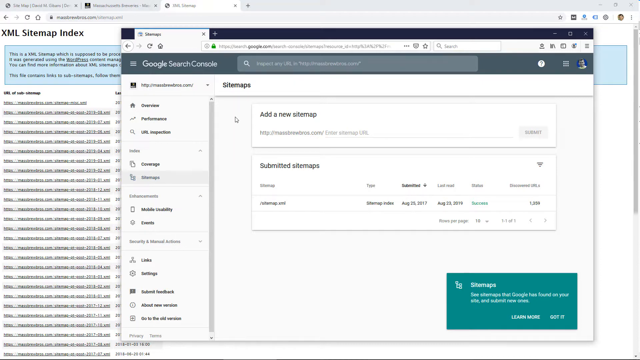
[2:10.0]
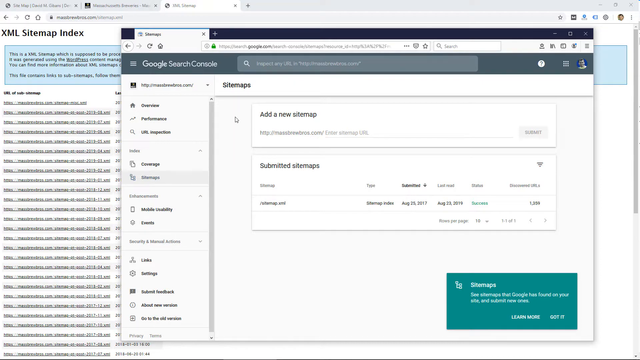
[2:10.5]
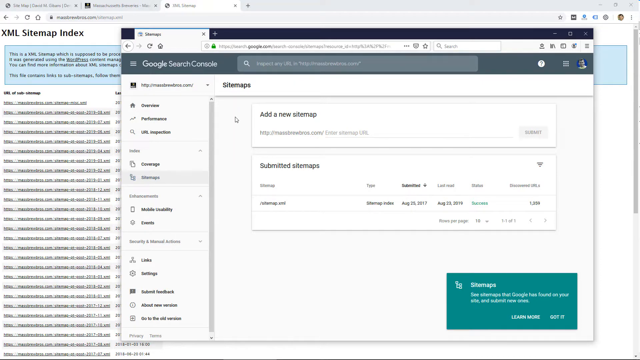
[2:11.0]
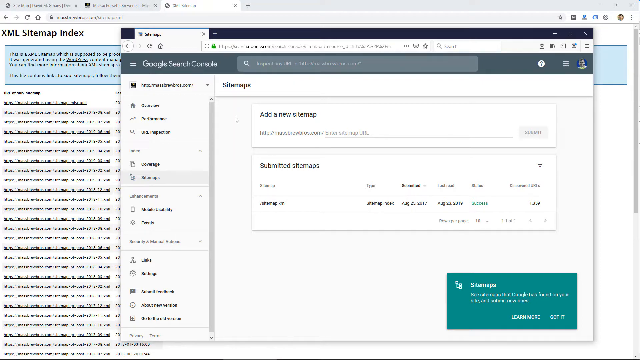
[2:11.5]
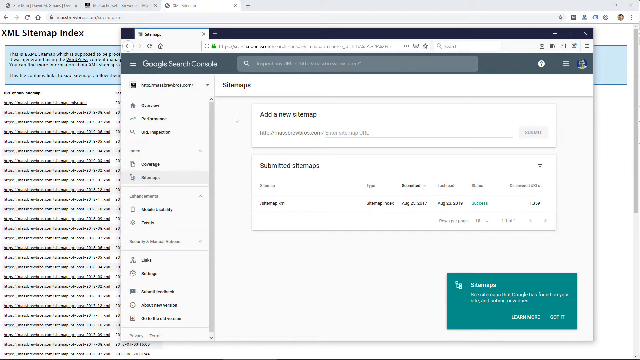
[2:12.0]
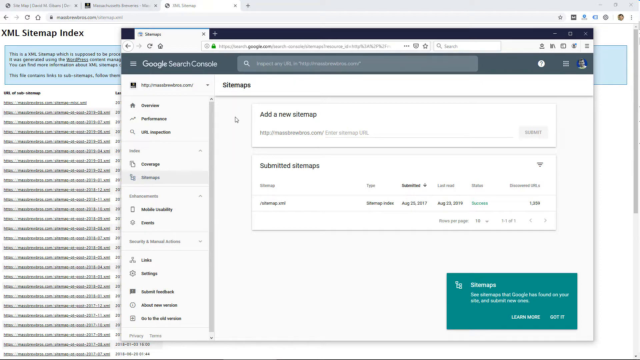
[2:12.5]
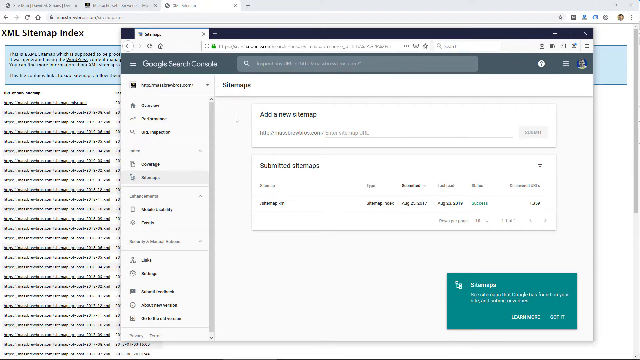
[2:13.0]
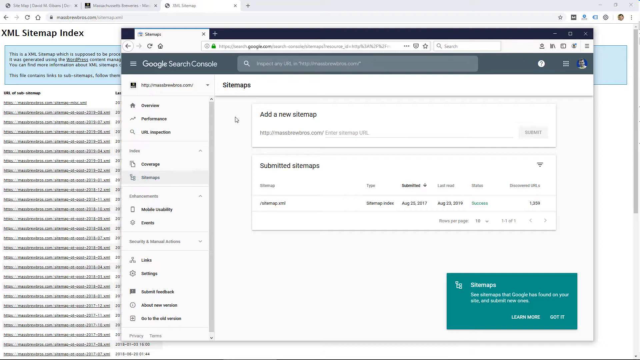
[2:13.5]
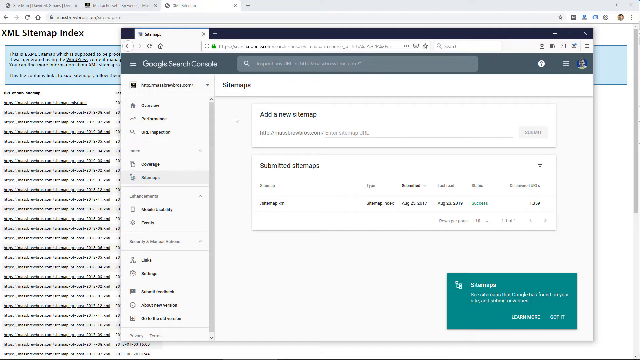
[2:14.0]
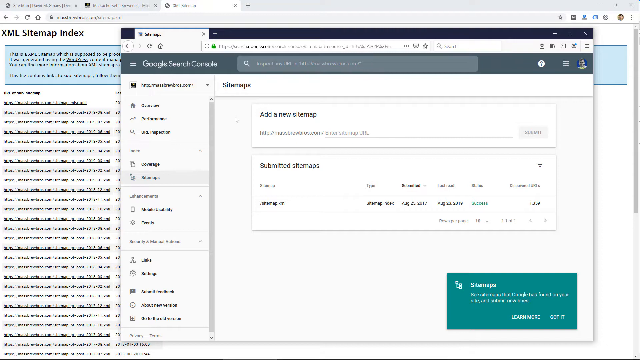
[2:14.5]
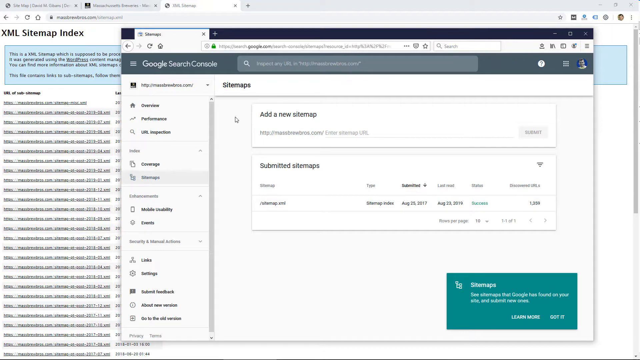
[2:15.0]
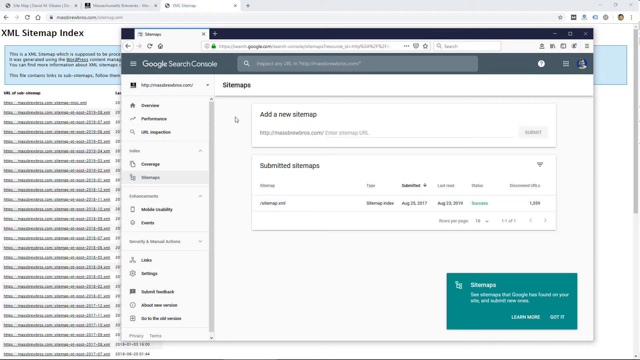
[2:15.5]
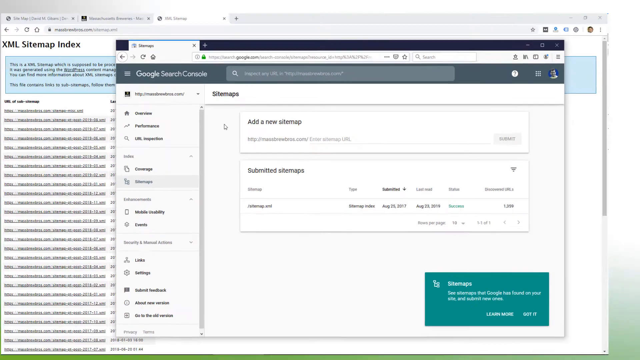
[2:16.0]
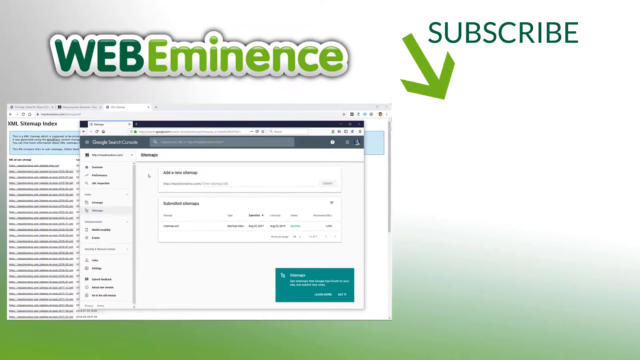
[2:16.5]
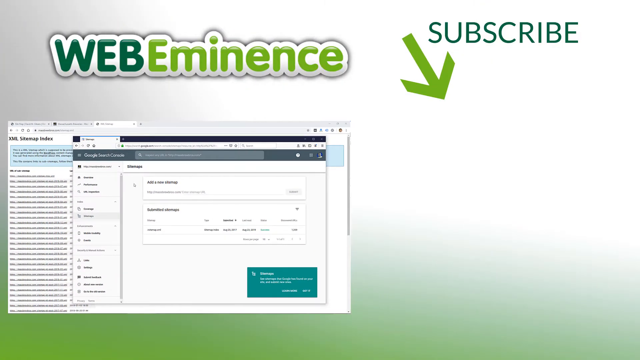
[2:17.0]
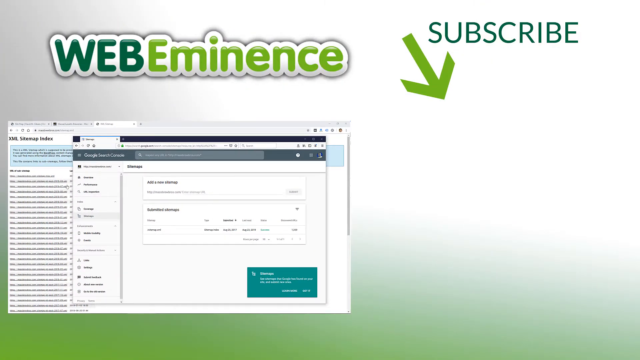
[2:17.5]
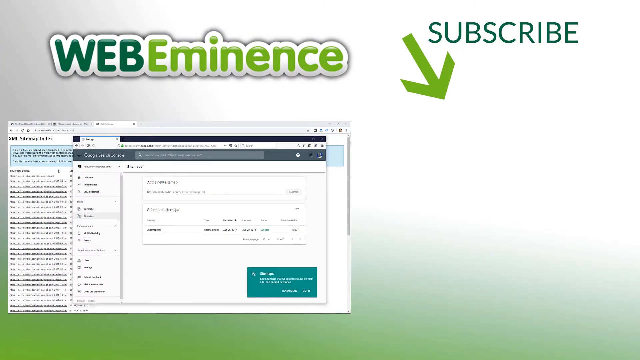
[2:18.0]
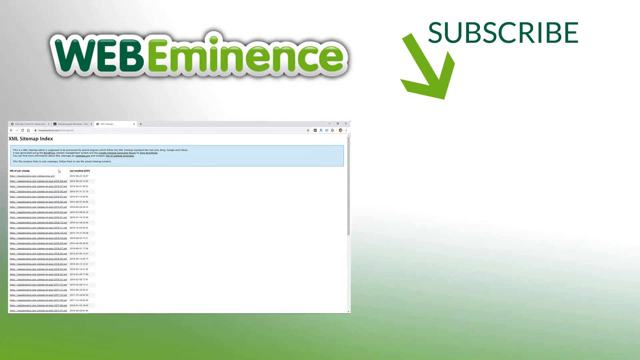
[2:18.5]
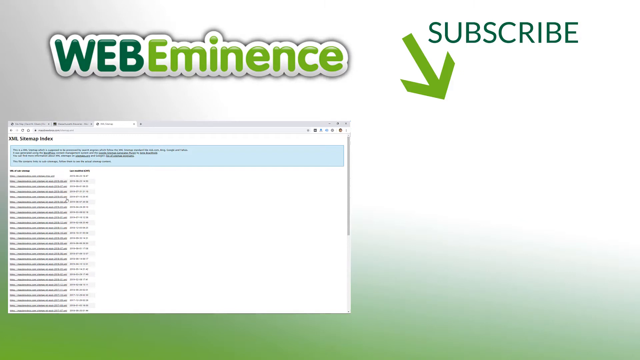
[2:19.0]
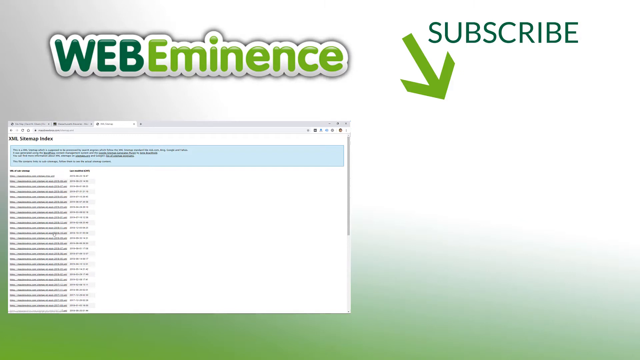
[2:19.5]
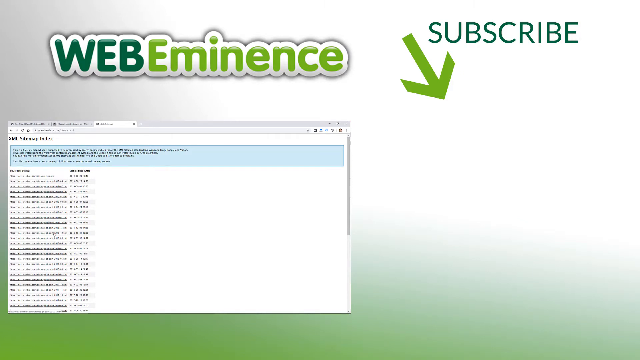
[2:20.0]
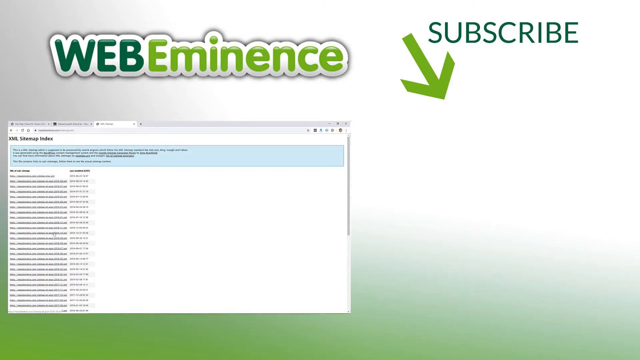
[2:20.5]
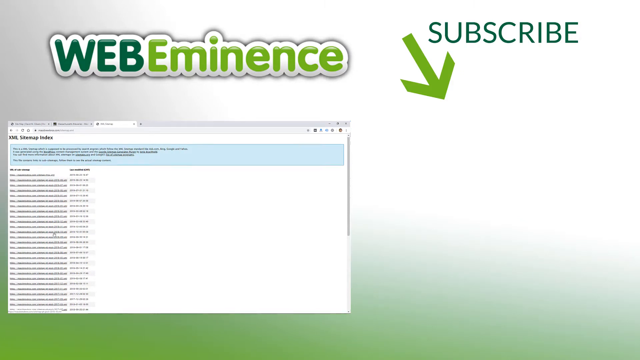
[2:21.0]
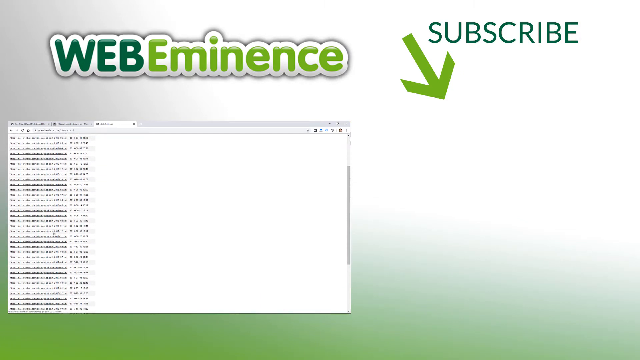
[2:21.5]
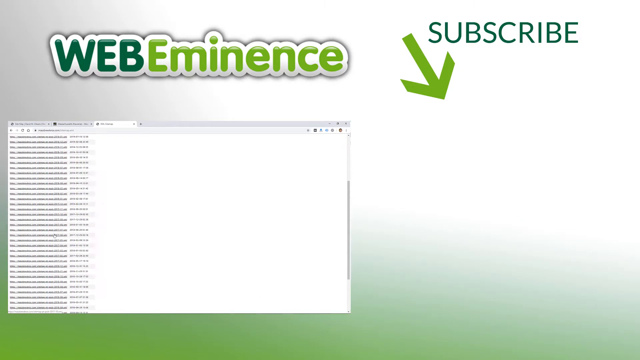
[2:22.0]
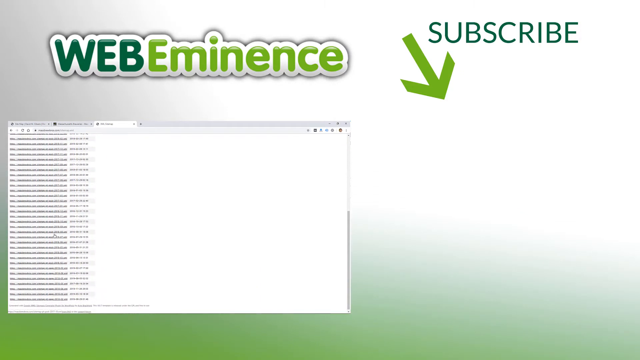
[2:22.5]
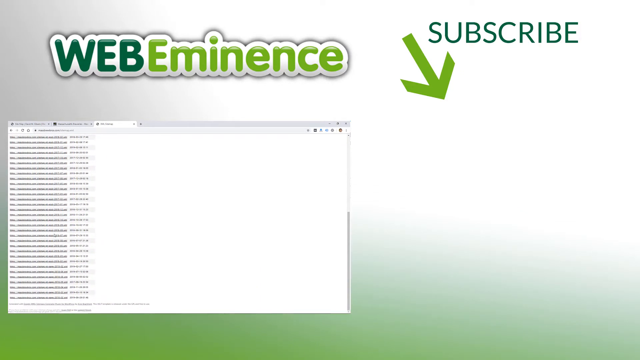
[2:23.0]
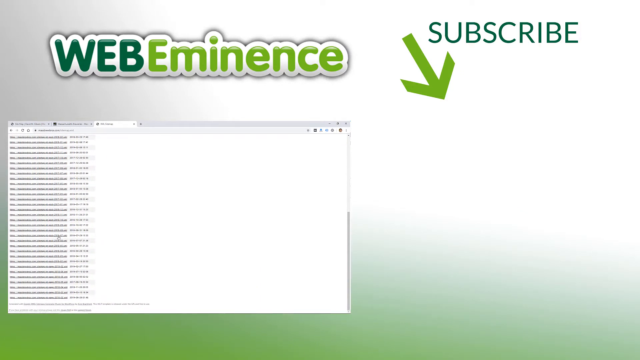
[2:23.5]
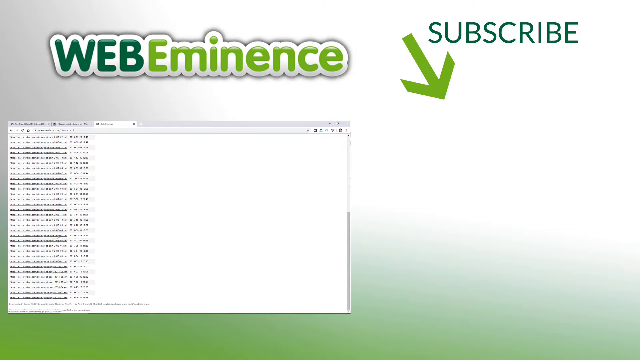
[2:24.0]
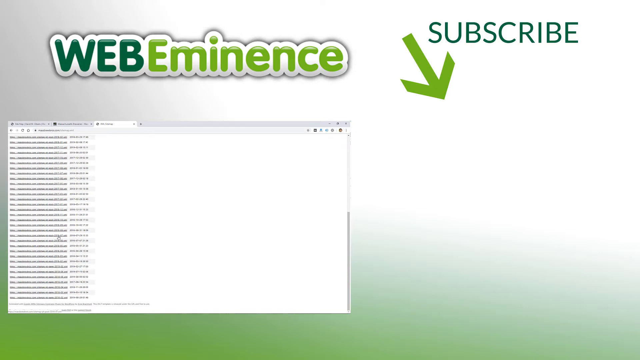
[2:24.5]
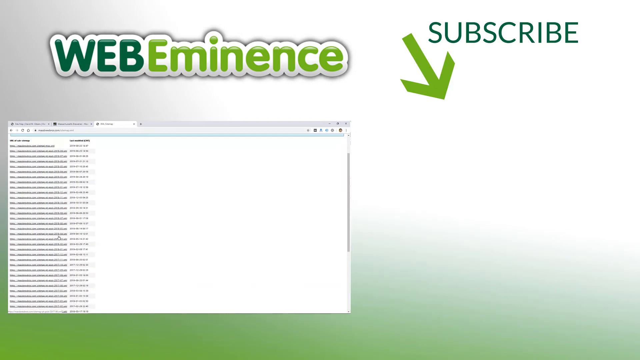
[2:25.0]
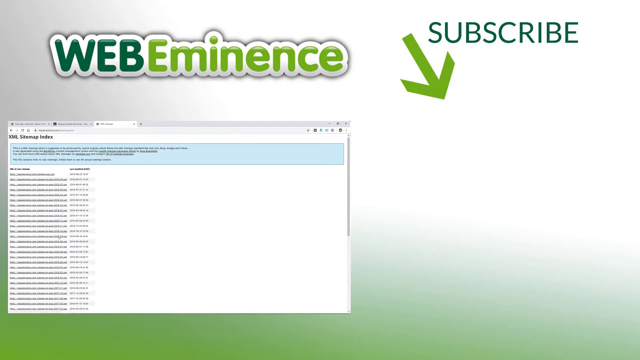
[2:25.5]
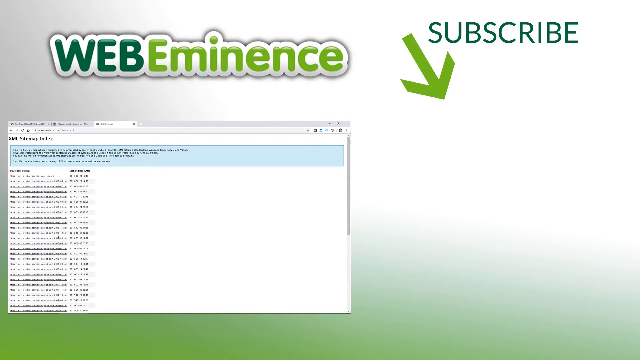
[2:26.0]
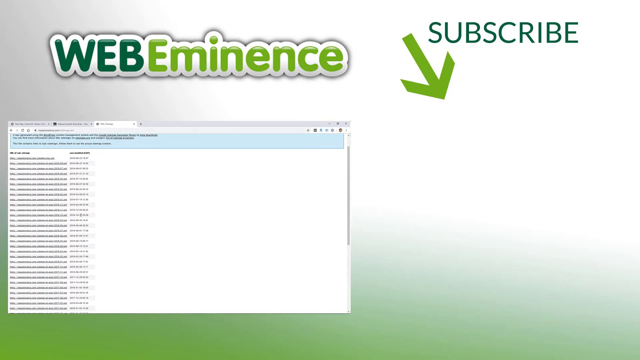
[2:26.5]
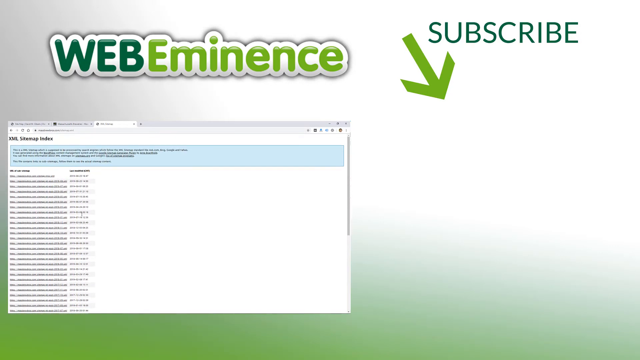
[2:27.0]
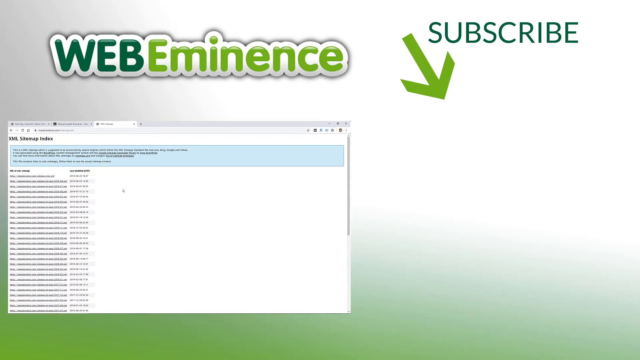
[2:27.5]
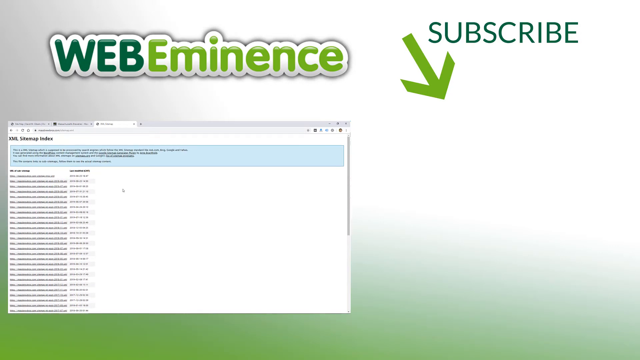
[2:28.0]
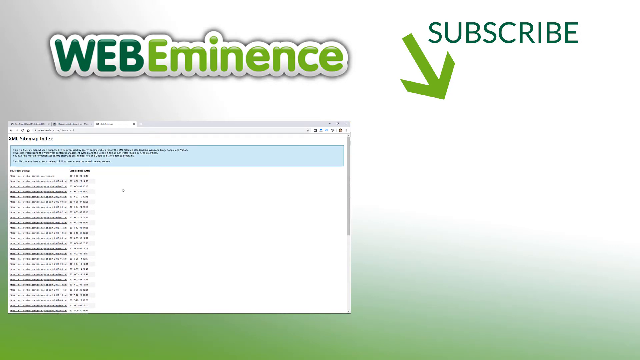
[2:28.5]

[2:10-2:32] A web page is shown with another page behind it; the foreground page has been minimized so it is smaller than the one behind. The larger page has three tabs open, and the third tab appears to be the open one. On the smaller foreground page, "add new sitemap" is at the top, with "submitted sitemaps" below. Below and to the right is a turquoise rectangle, wider than it is tall, with white letters reading "sitemap." At the bottom are "learn more" and "got it." A mouse pointer is on the screen. That screen shrinks and a screen with a white background appears, with "web" at the top left and "EMINENCE" to its right. At the top right is a subscribe button, and an arrow points toward the bottom right of the screen. The pointer scrolls down, pointing at URLs, scrolls back up the page, moves to the right of the URLs, and the screen goes black.